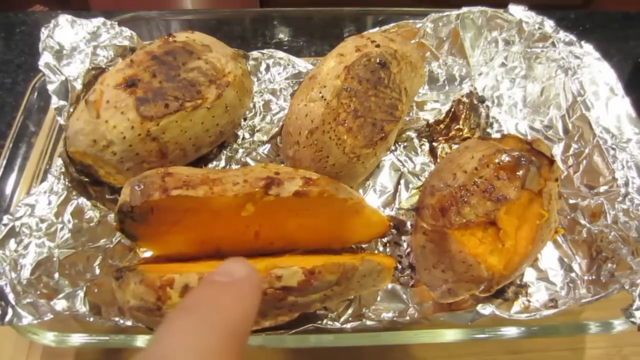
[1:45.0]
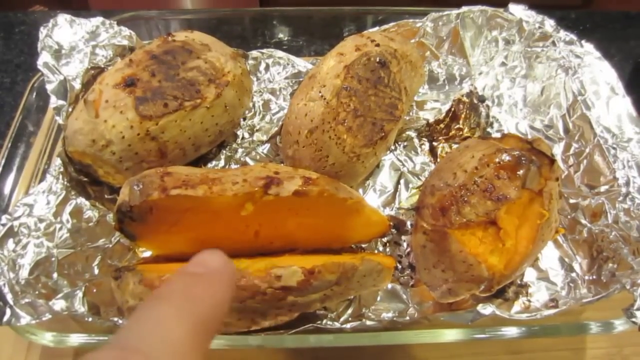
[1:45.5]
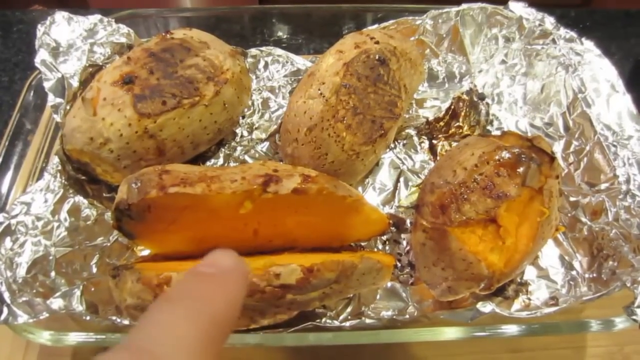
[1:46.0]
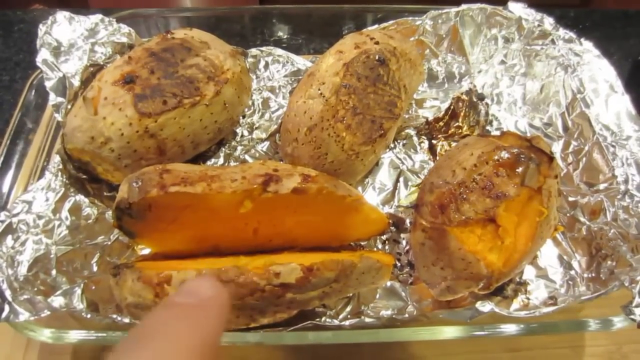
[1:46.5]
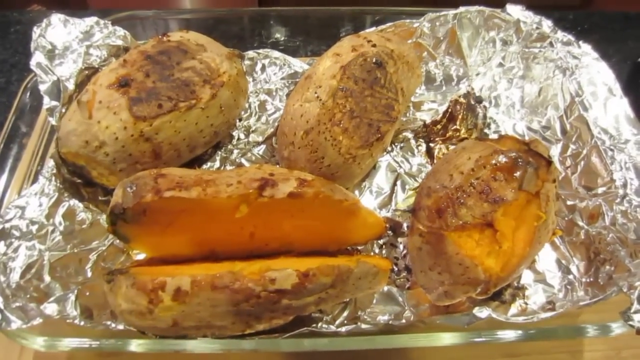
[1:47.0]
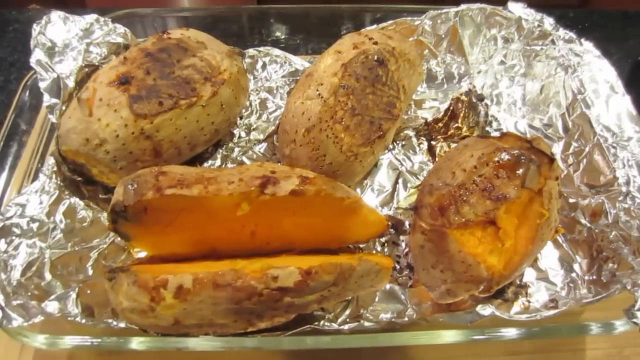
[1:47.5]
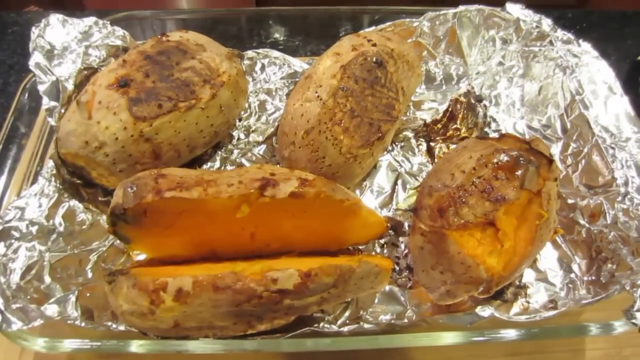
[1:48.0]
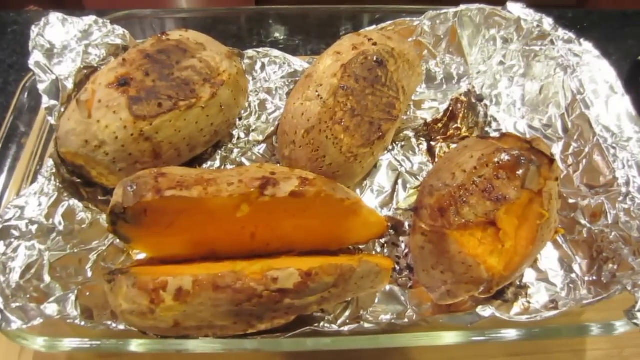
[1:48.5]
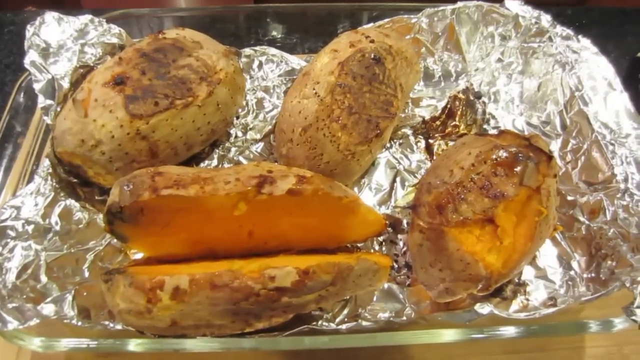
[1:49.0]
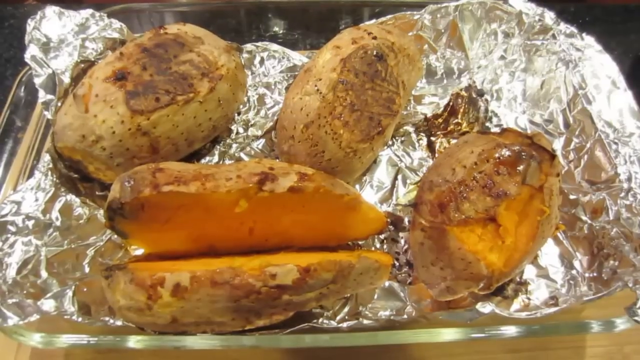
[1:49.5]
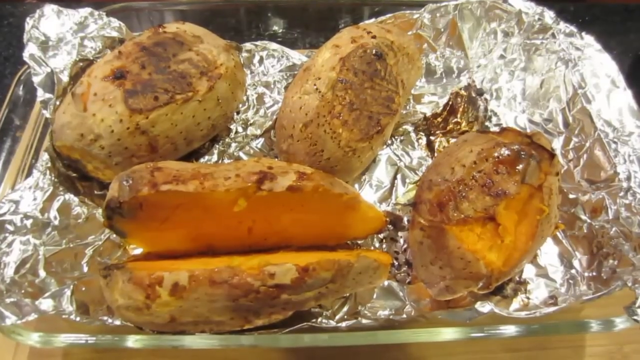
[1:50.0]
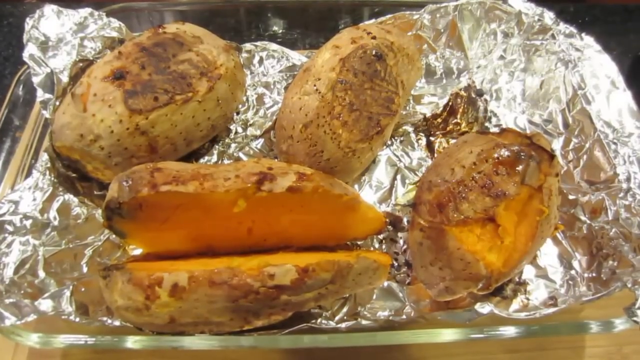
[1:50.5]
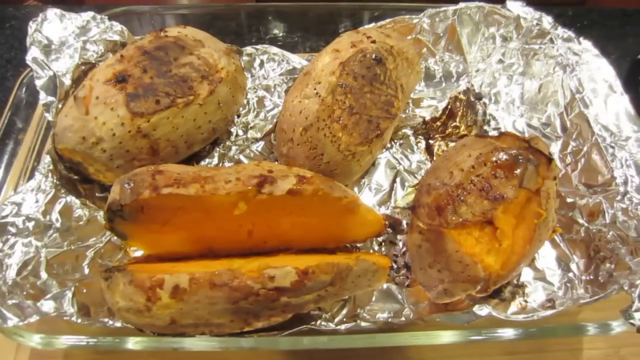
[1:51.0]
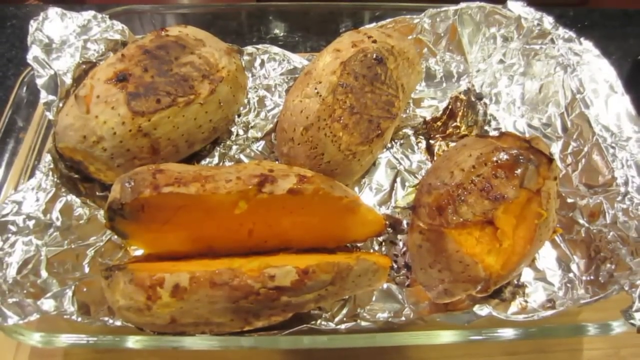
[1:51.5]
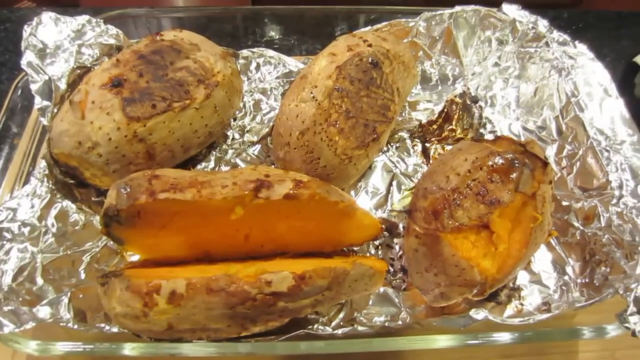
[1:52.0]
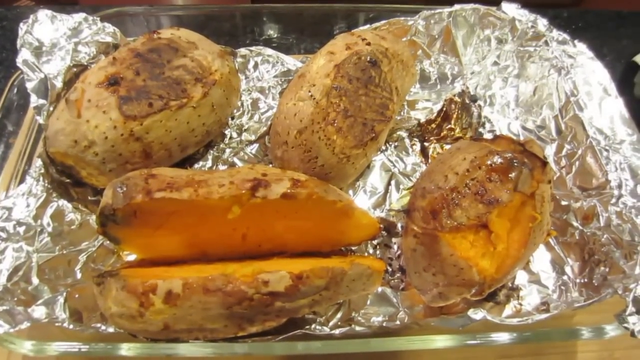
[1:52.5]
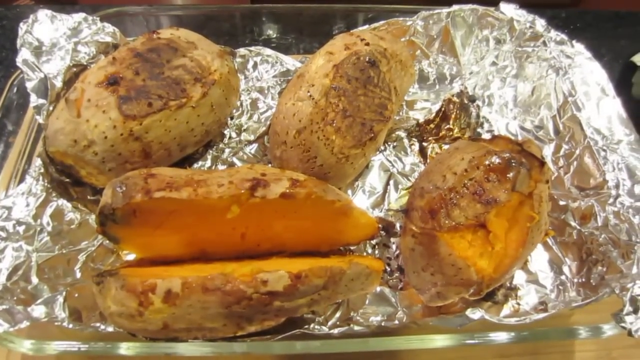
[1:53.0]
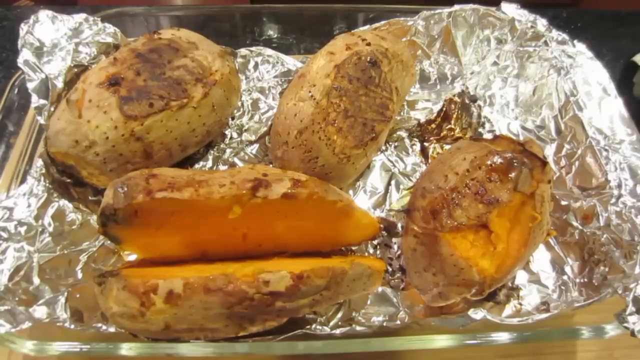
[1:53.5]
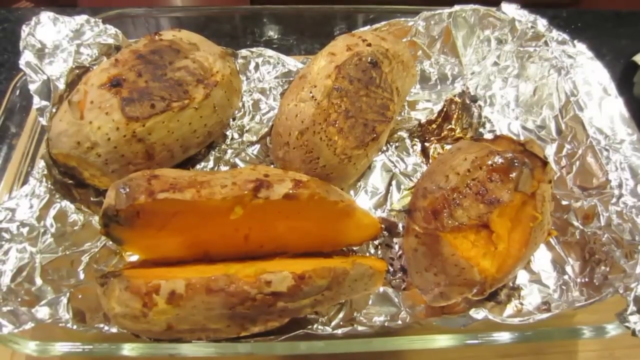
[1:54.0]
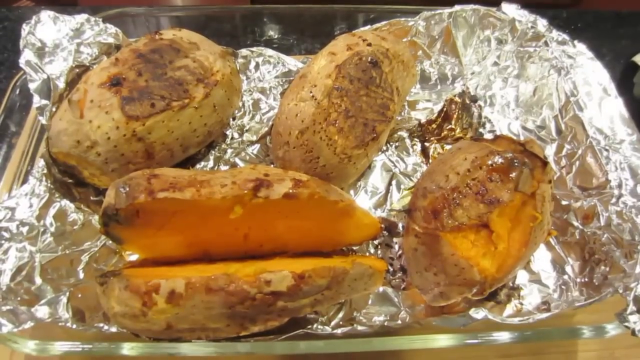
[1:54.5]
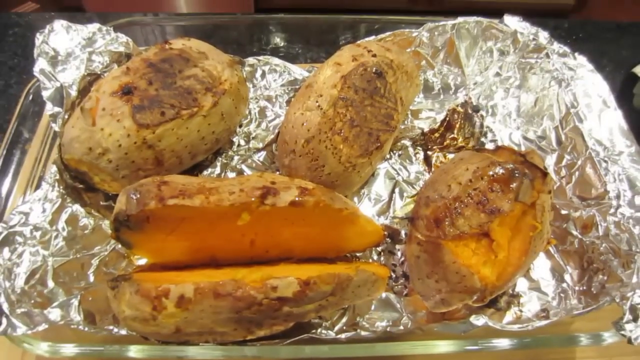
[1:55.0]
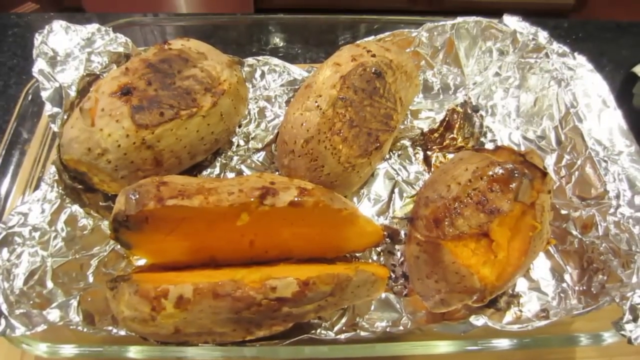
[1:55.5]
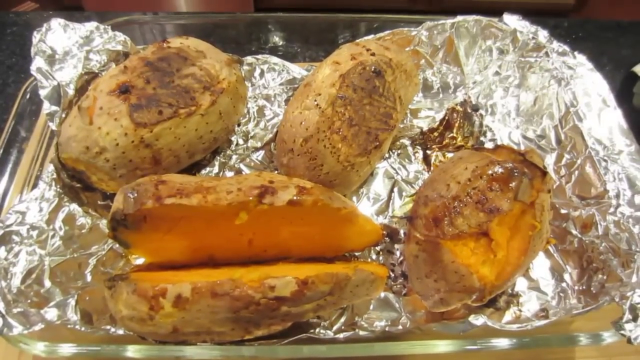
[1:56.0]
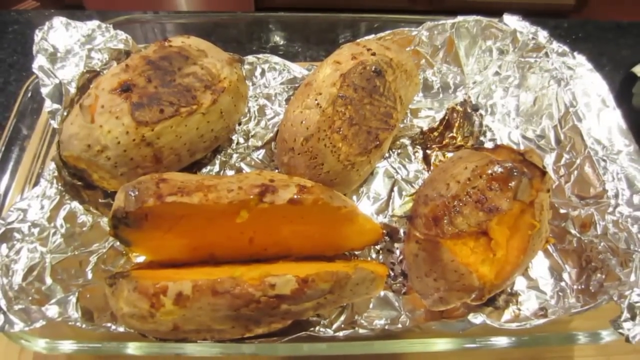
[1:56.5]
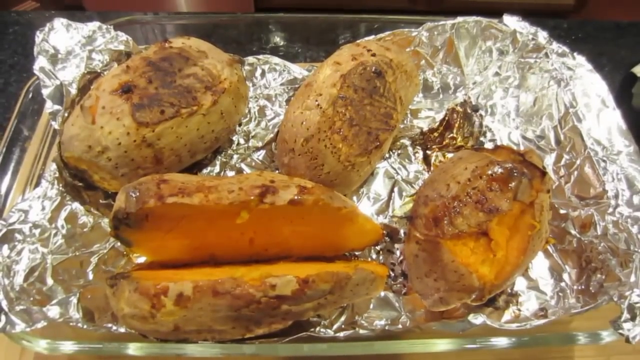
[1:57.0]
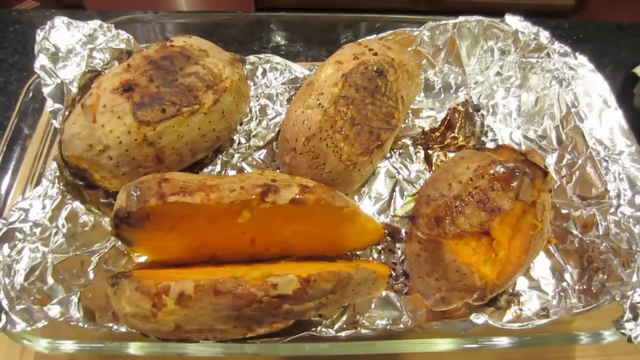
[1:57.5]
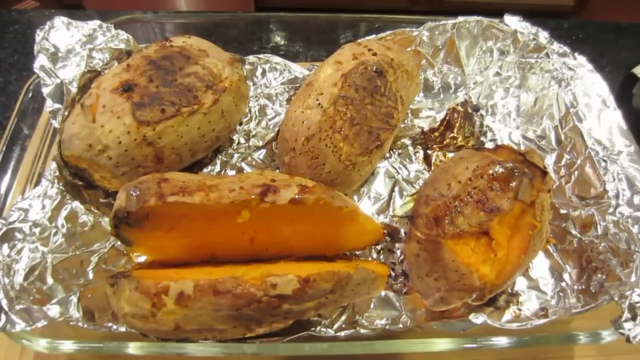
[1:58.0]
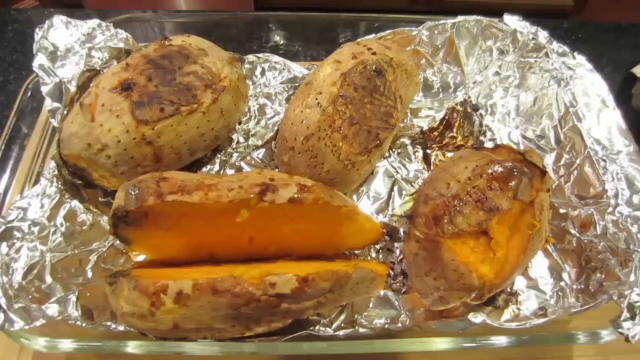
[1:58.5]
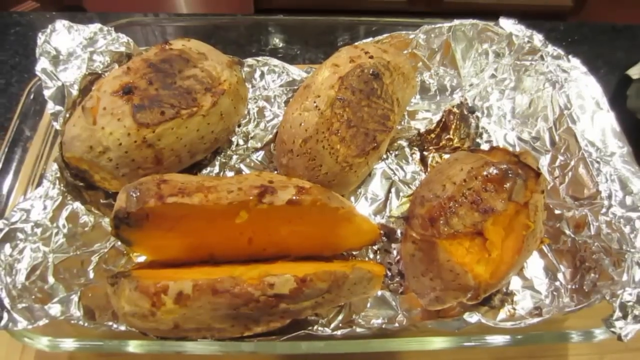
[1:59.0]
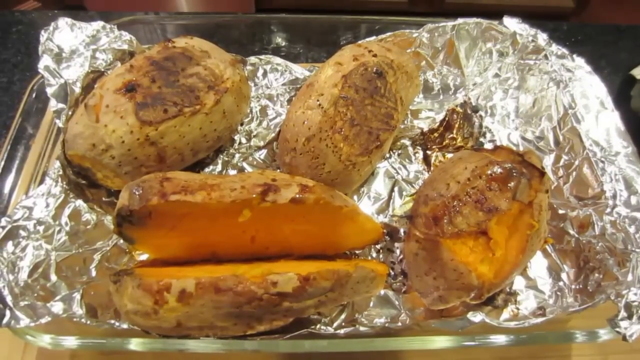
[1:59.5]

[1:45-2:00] Four sweet potatoes are arranged on a crumpled, used piece of aluminum foil with some dark brown spots, laid in a deep glass baking dish. One sweet potato faces horizontally in the lower left corner of the dish, cut wide open horizontally, and a finger points at its dark orange center. The three other sweet potatoes, two above it and one to its right, are smaller and not cut open; they face up, slanted with their tops slightly toward the right. The finger disappears after a second or two, and the camera continues looking from the top down at the dish. The camera is a little shaky and zooms in a little on the sweet potatoes. The outer skins of the uncut sweet potatoes are slightly blackened, with a bunch of little holes that look like they are from forks.